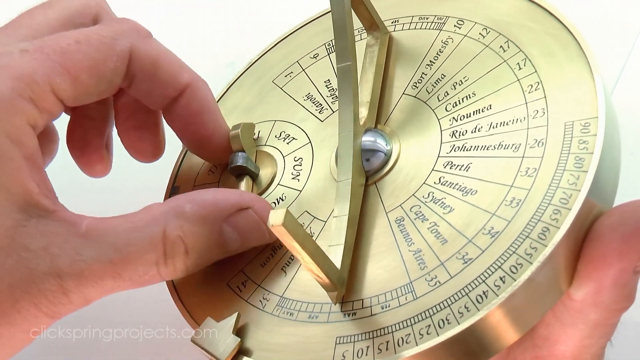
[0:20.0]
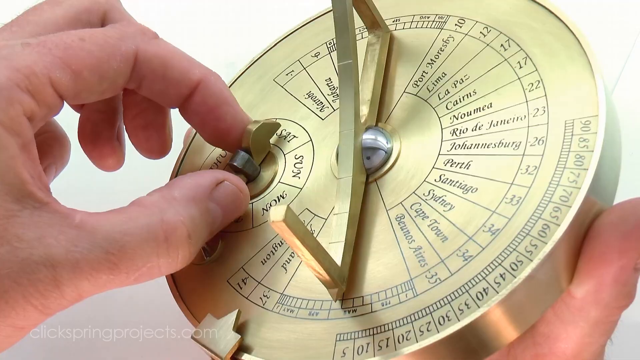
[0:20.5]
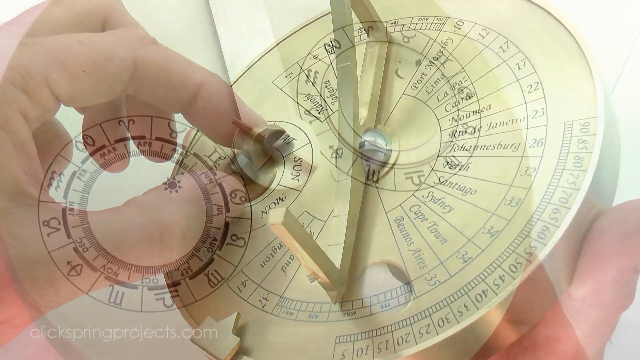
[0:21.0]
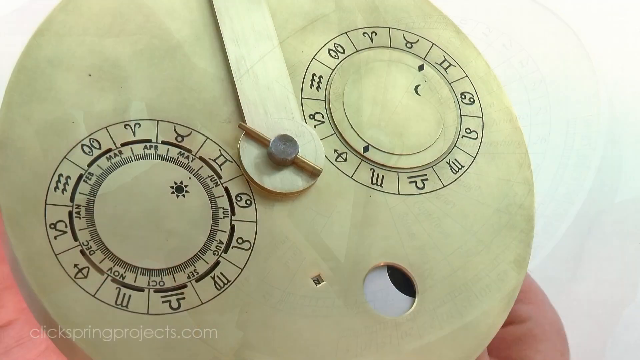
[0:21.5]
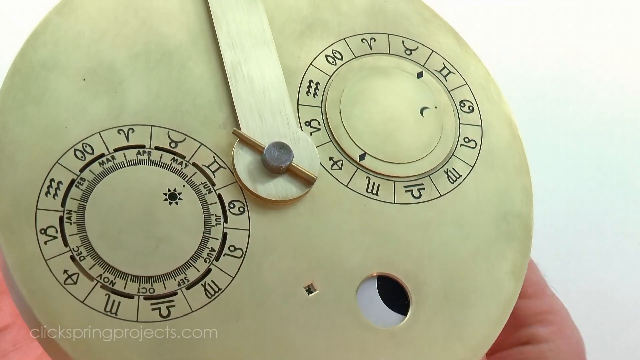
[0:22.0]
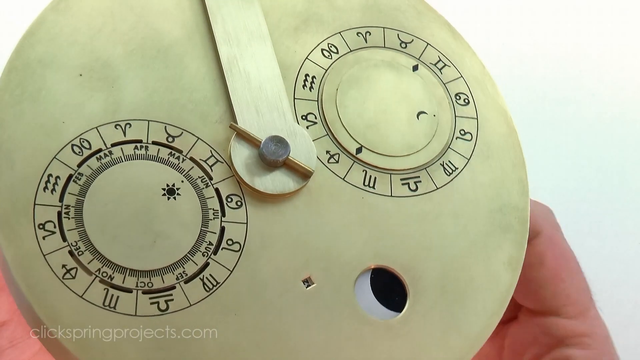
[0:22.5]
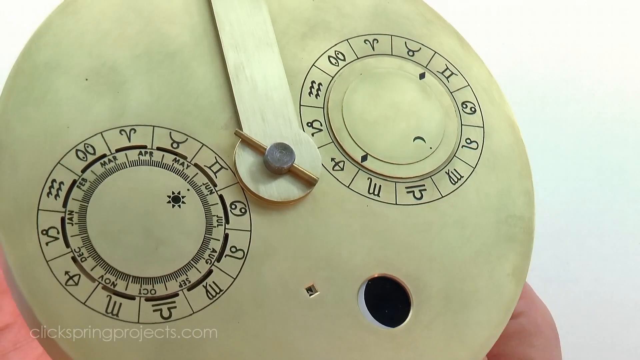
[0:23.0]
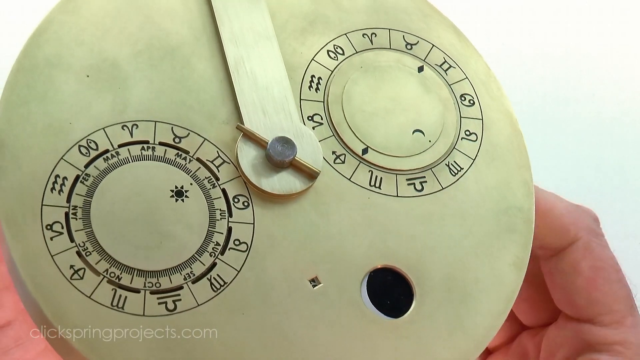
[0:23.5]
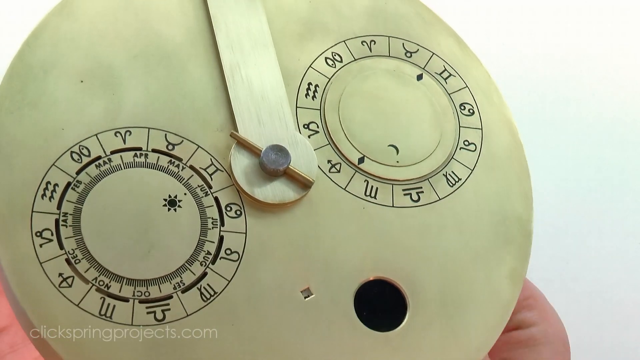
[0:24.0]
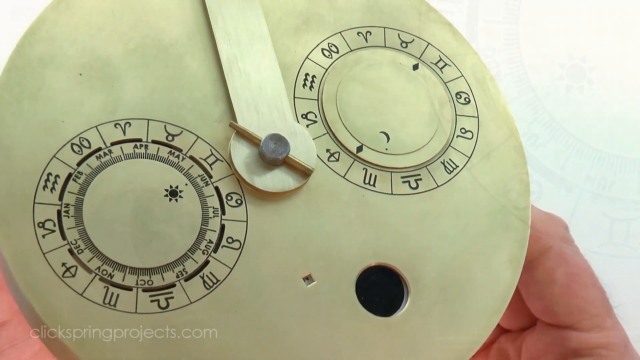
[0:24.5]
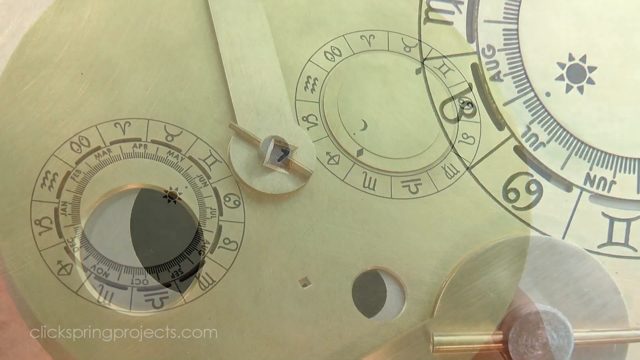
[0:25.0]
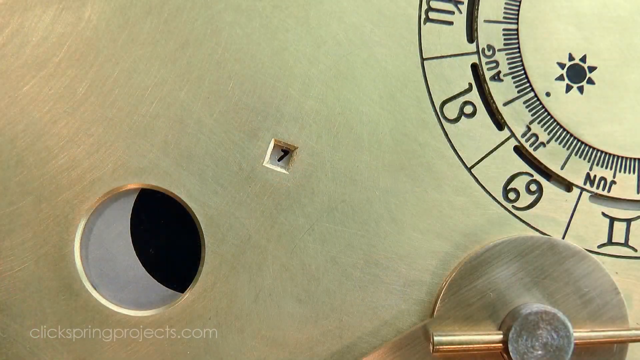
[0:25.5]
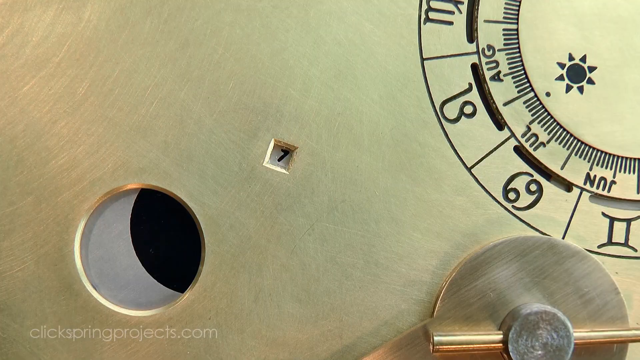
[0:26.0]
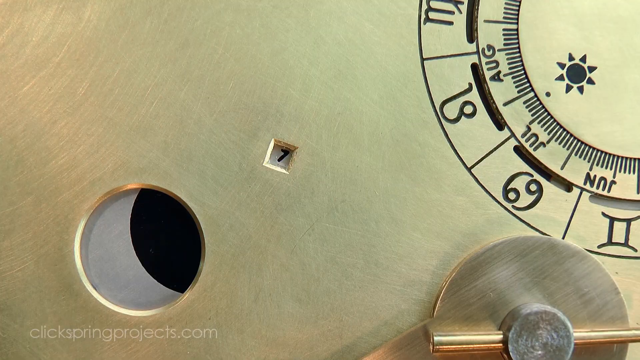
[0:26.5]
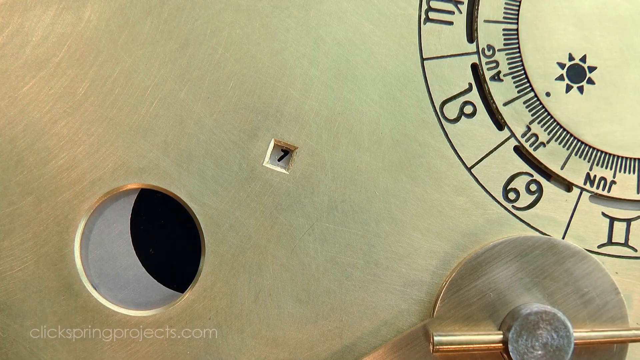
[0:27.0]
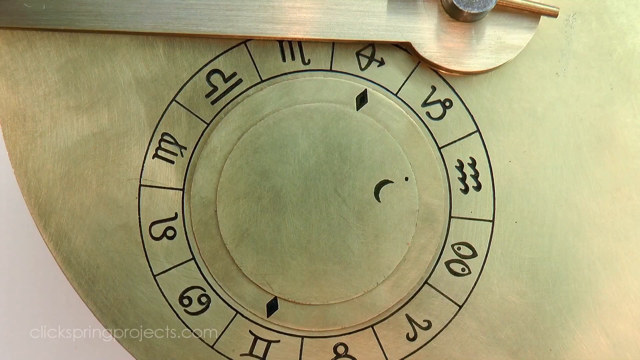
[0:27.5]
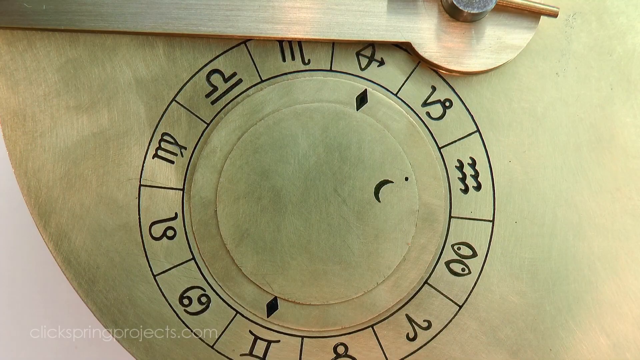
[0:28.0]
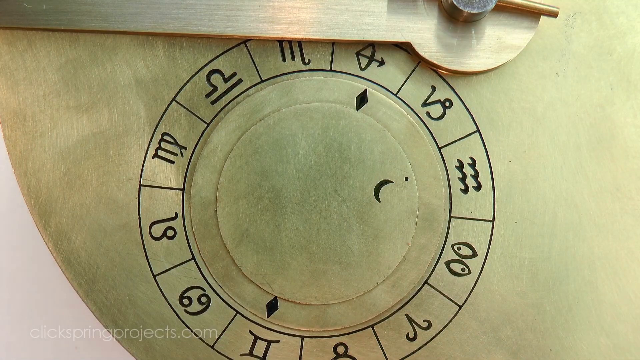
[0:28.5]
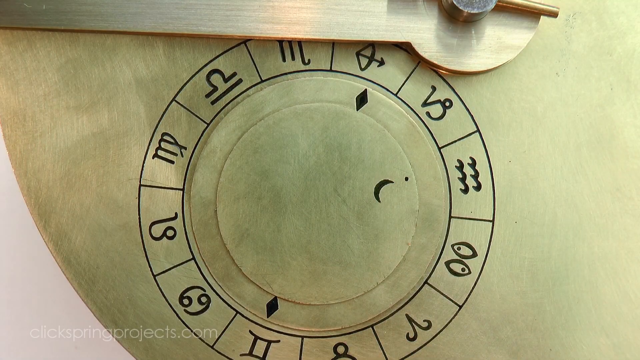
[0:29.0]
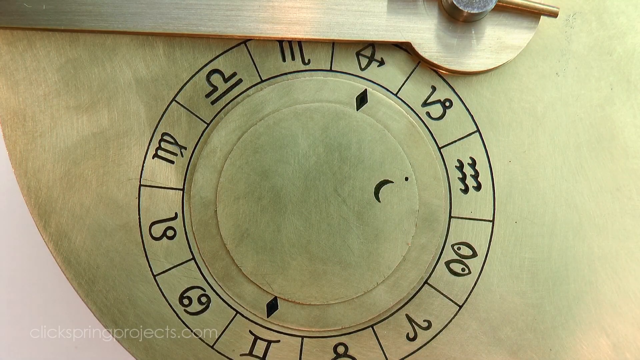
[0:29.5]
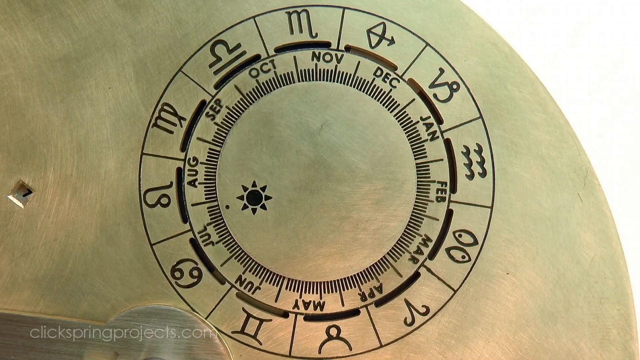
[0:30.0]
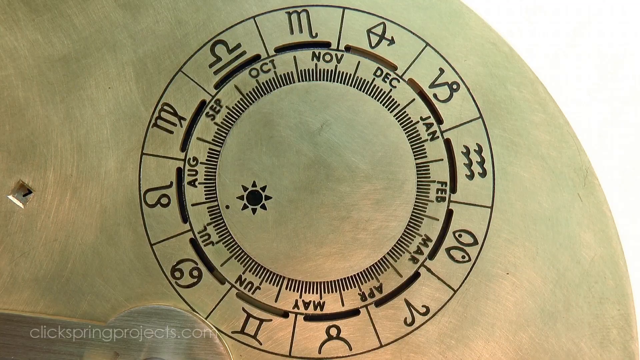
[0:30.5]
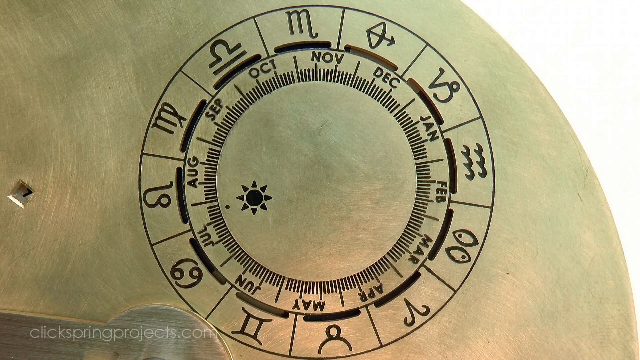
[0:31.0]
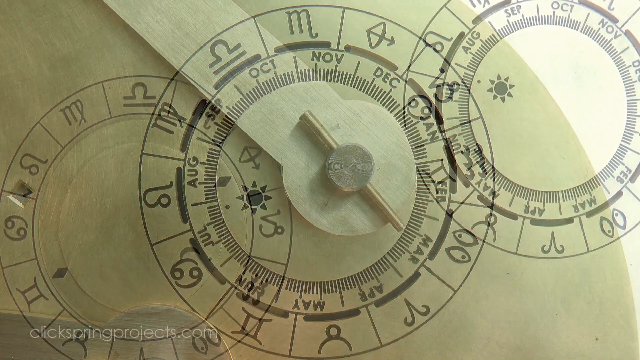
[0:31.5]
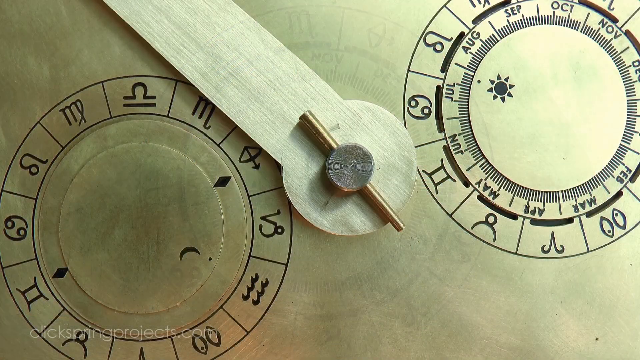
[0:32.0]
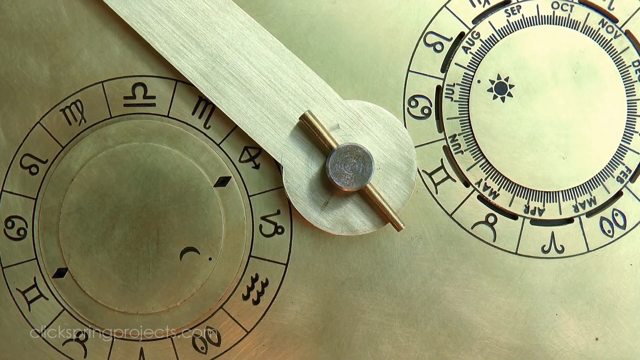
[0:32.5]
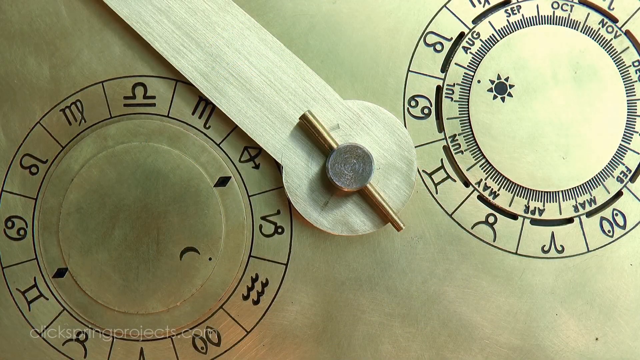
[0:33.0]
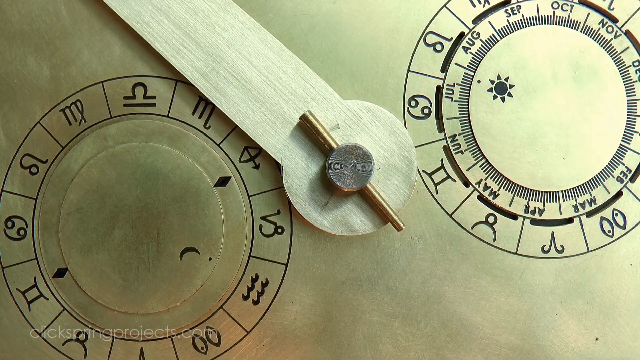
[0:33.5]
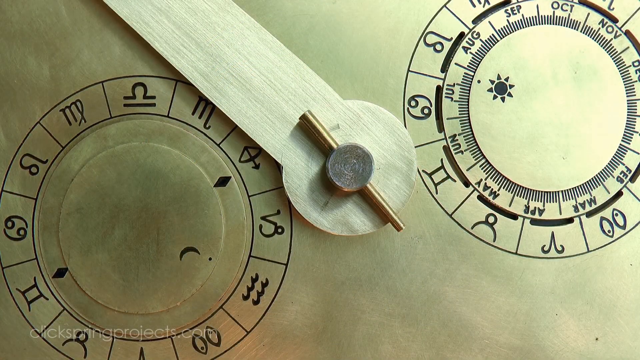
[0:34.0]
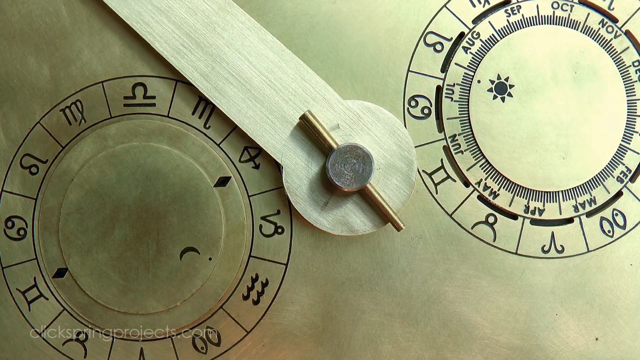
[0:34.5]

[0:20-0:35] Hands fiddle with the Byzantine sundial calendar, manually turning a pointer on the days. Another pointer is turned, where each location is a different symbol on the gold circular part; it appears to show the location of the sun and the moon. The view goes from the sun and moon location to the turning of the different days, all on the gold sundial. It appears to show the phases or location of the sun and the moon, with the moon on the right and the sun on the left.